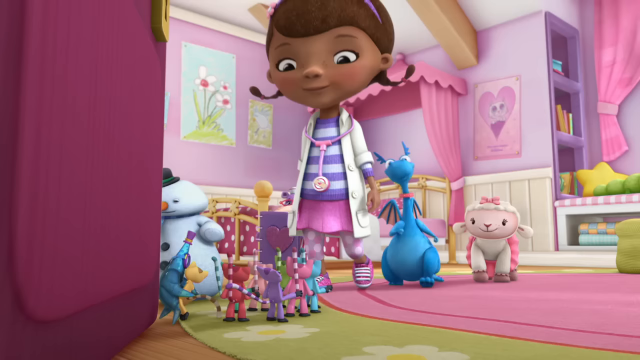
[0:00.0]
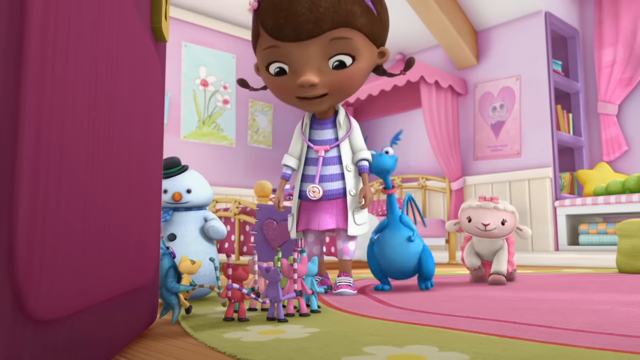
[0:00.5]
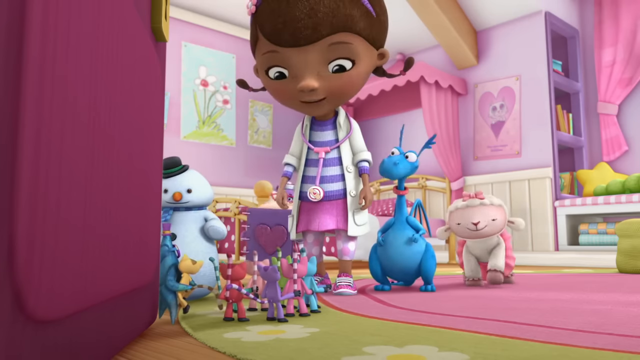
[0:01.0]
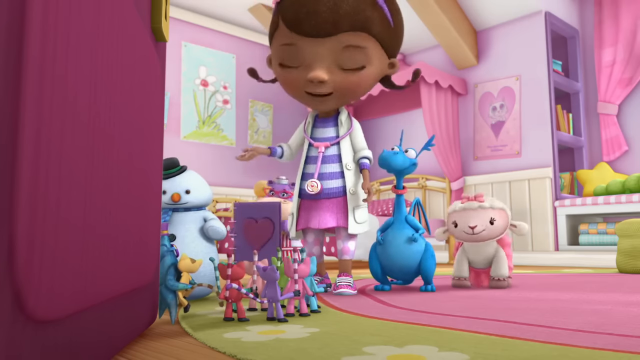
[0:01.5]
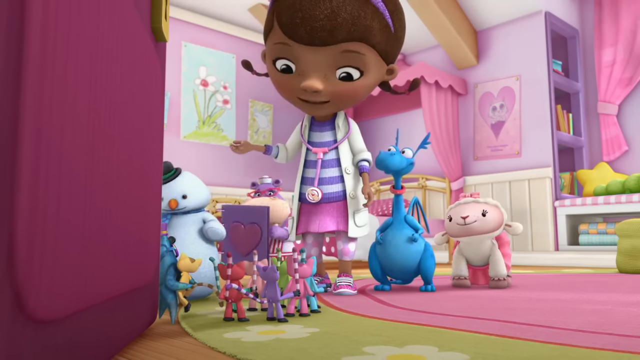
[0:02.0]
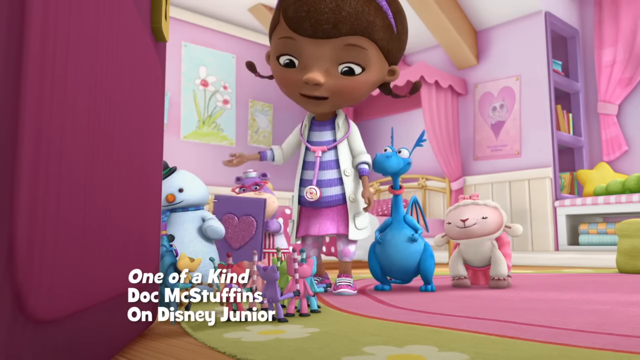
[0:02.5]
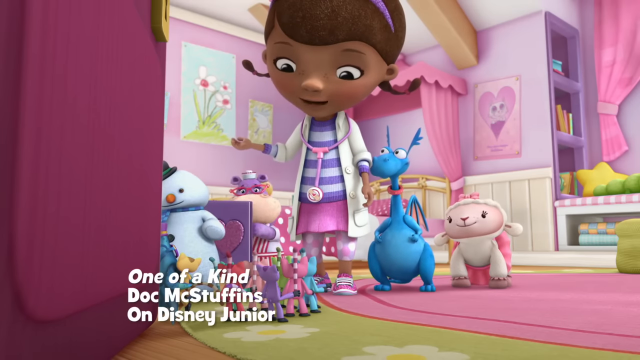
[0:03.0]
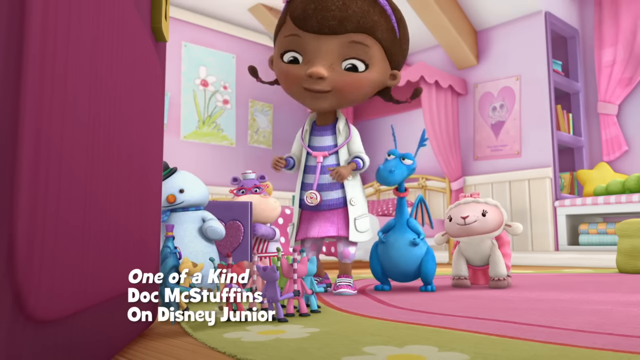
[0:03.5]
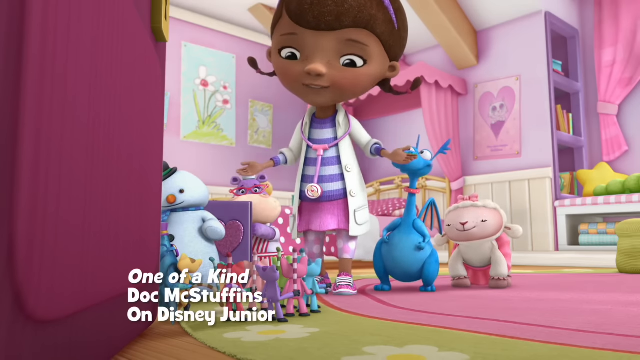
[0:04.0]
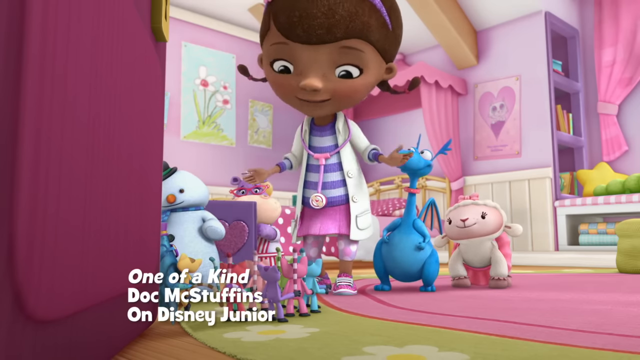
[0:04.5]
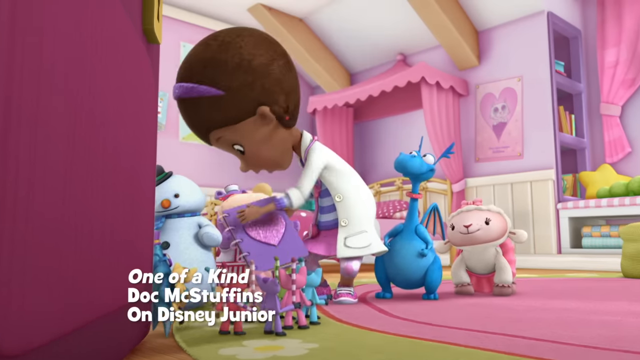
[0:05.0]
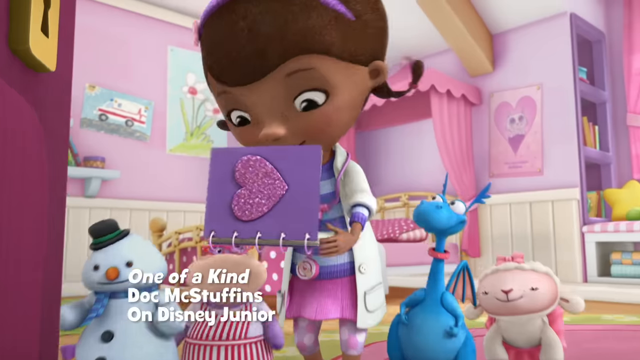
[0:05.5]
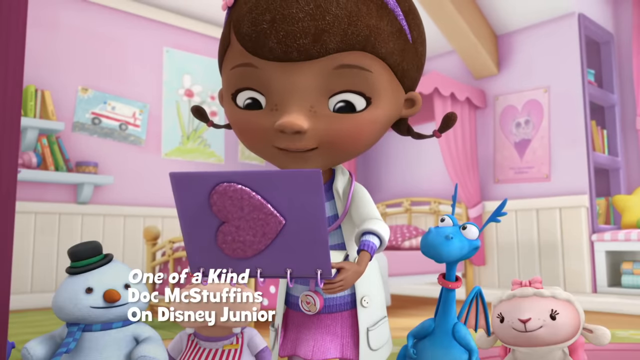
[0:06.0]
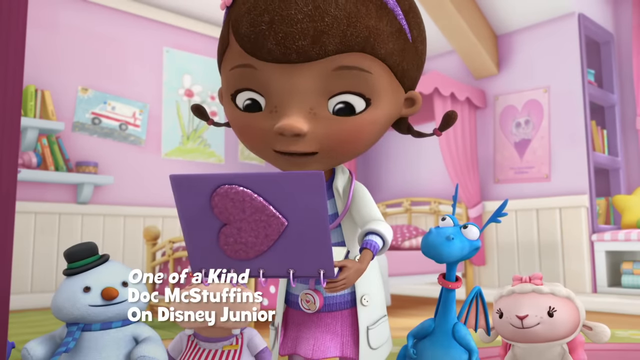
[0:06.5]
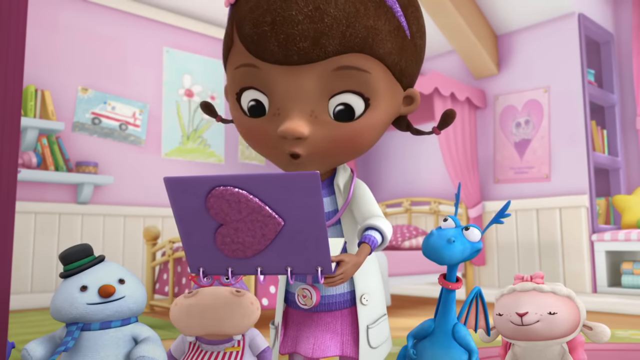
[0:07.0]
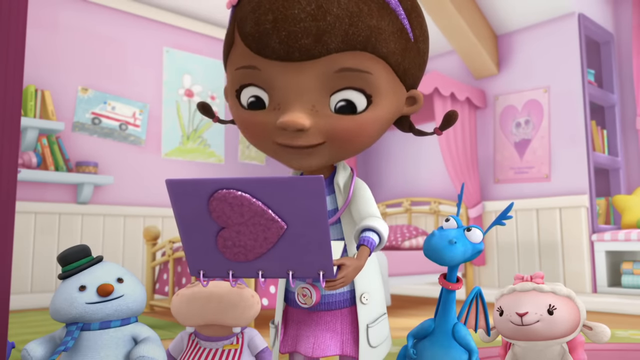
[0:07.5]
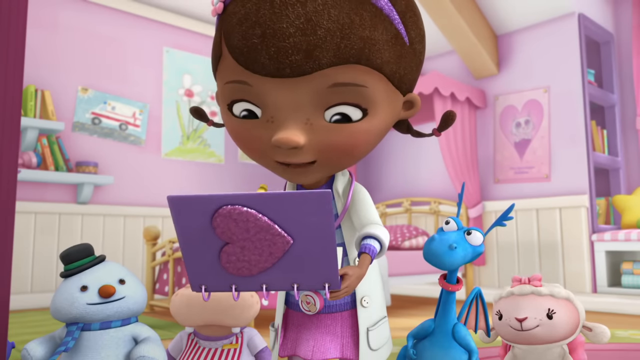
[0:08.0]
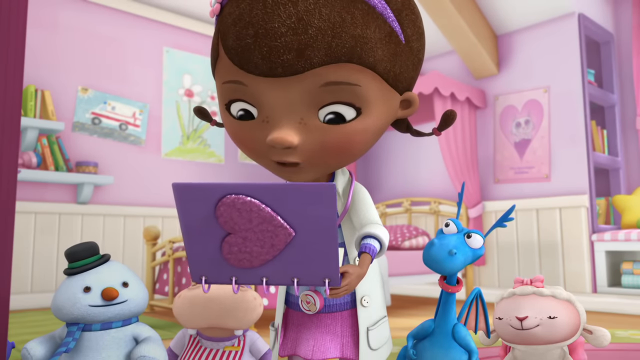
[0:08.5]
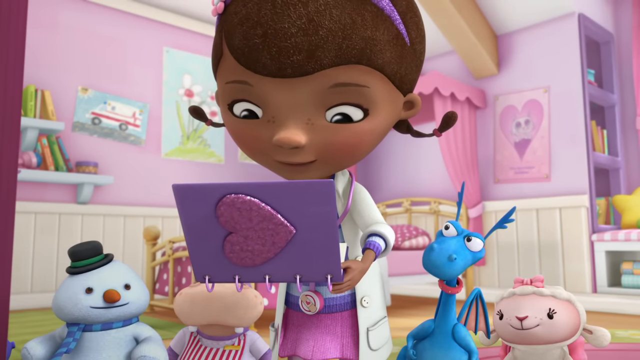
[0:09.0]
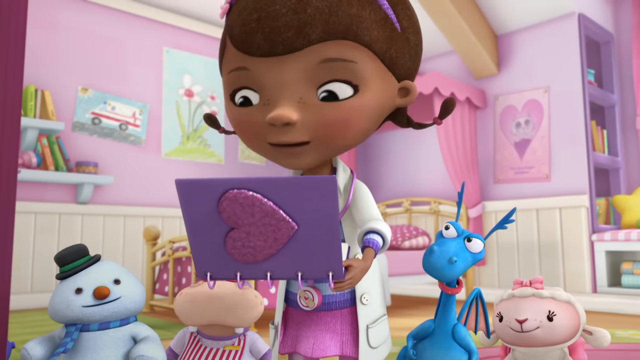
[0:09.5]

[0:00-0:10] A young Black girl in a doctor suit appears alongside the title "One of a kind Doc McStuffins on Disney jr". The girl has friends: a dinosaur, a sheep, a snowman, and some people, plus many small cats and a shark-like toy. The girl takes her notebook with a heart. She is in her room, which is pink with some white add-ons.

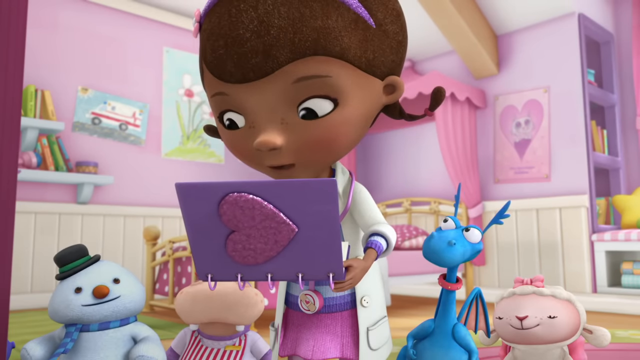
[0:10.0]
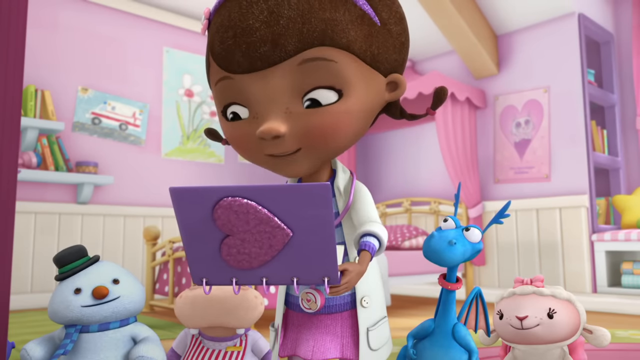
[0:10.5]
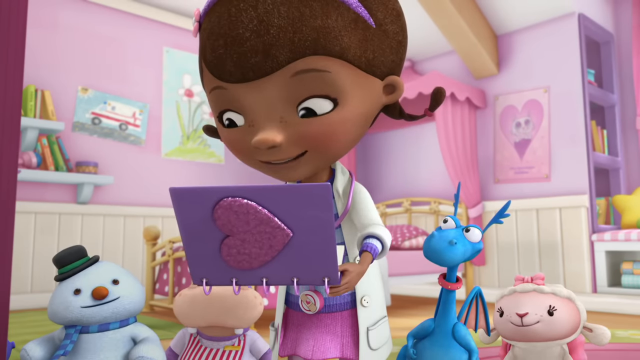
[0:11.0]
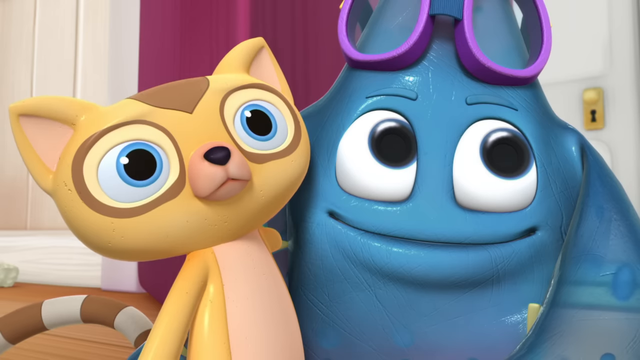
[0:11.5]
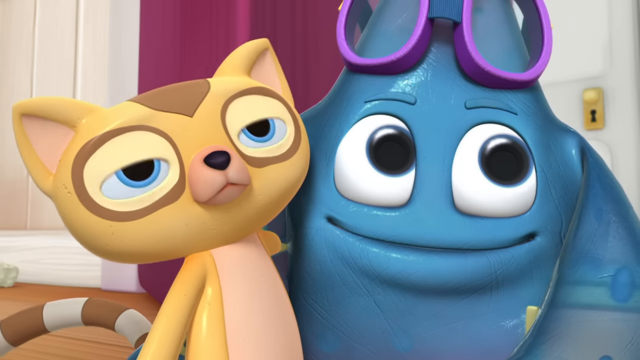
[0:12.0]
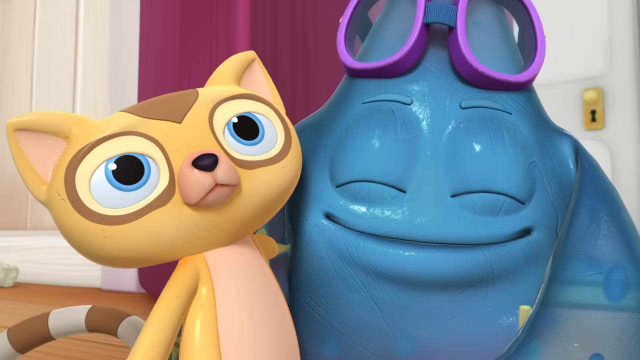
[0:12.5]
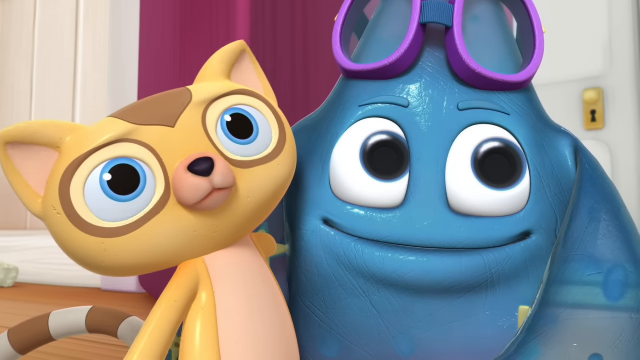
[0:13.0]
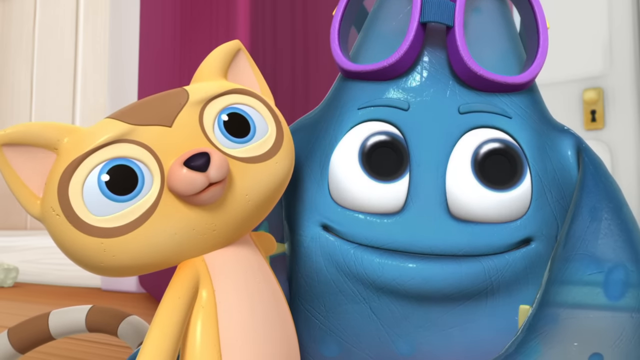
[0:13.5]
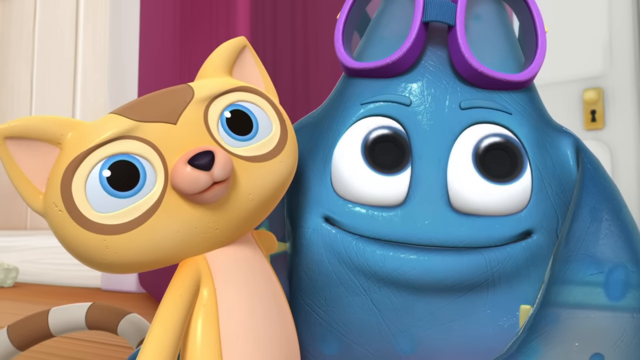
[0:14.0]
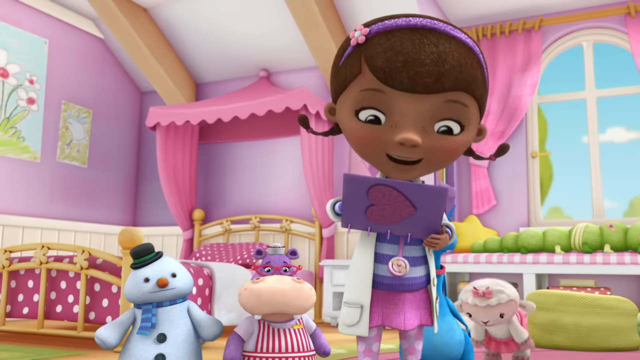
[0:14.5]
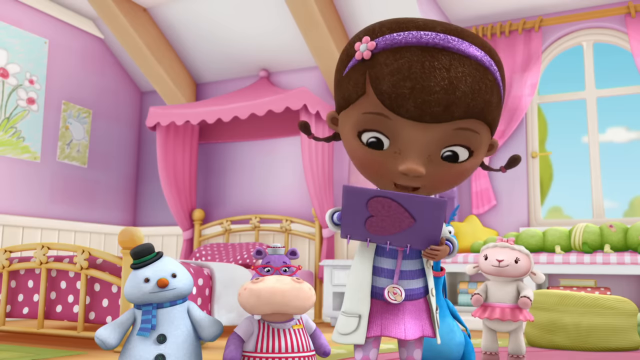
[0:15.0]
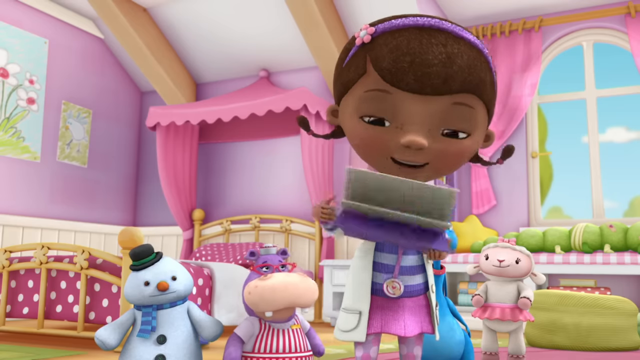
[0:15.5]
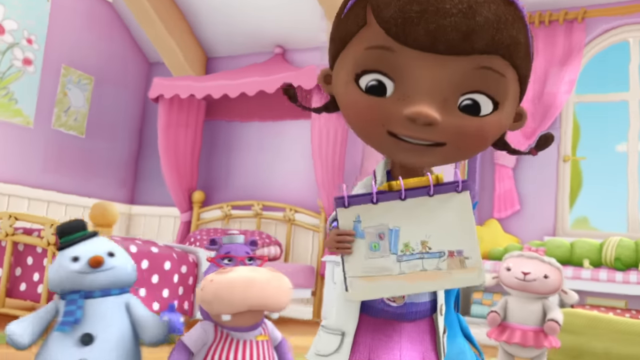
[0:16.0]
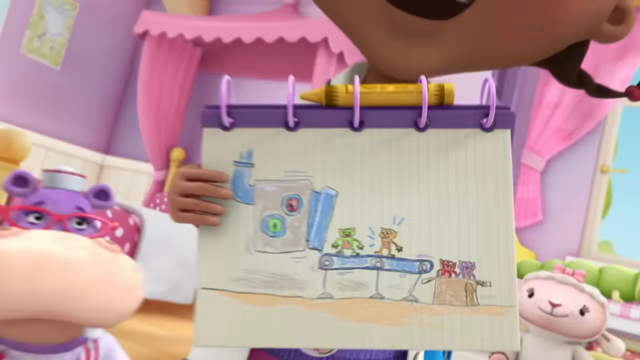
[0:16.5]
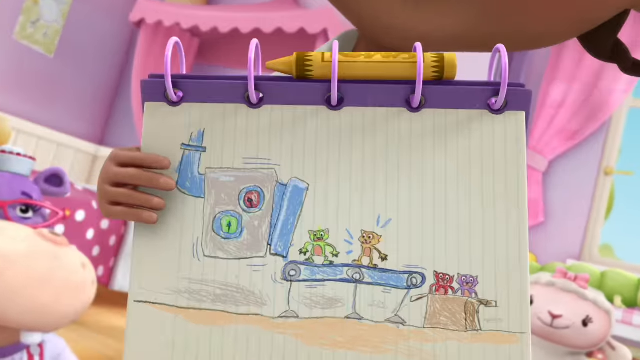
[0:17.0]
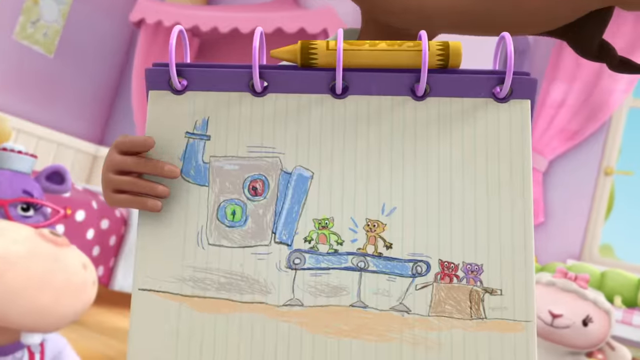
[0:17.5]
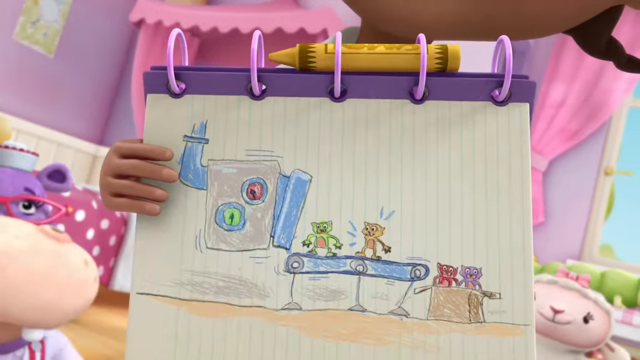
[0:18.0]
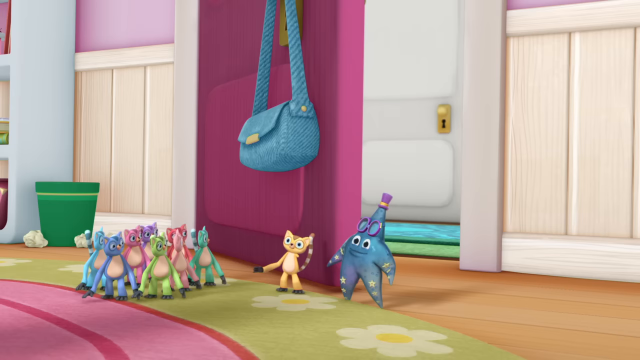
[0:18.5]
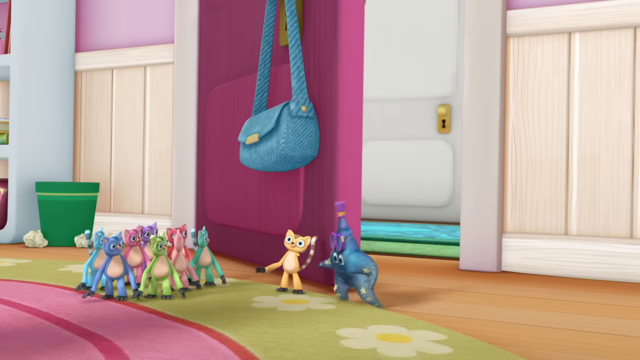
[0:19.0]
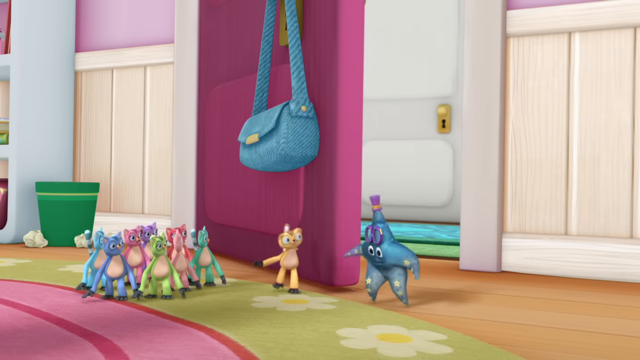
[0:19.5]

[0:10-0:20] The girl talks to her friends. One is an unidentified fish-like creature and the second is a cat. They look at the girl and smile. The girl writes something in her notebook, then shows the cat and the other animals a picture of the pets going into an unidentified machine that appears to be something scary. After that, all of the pets go off somewhere.